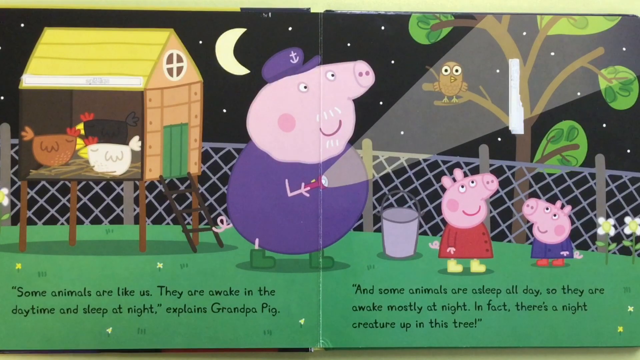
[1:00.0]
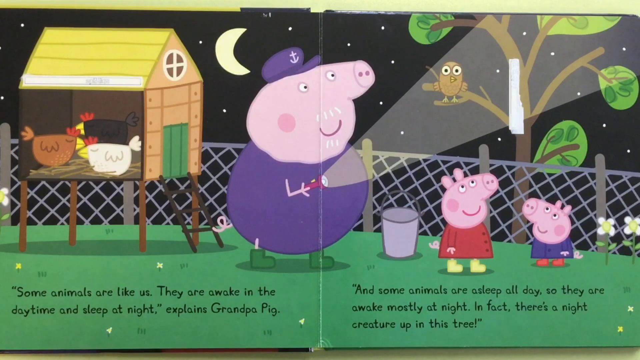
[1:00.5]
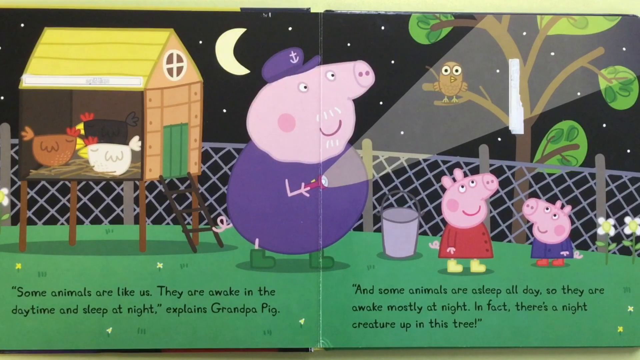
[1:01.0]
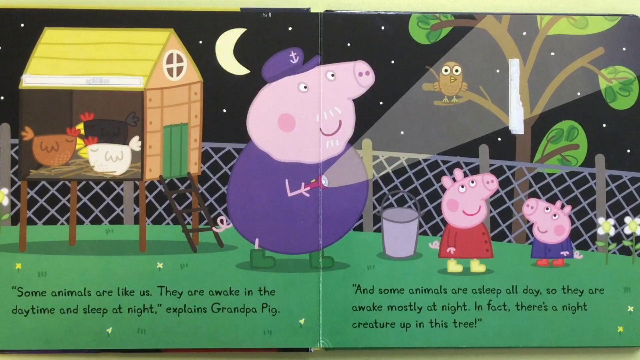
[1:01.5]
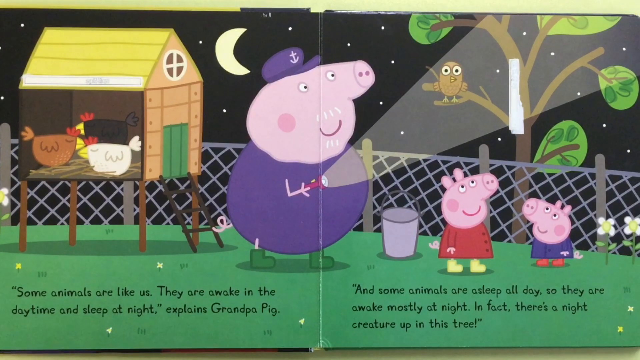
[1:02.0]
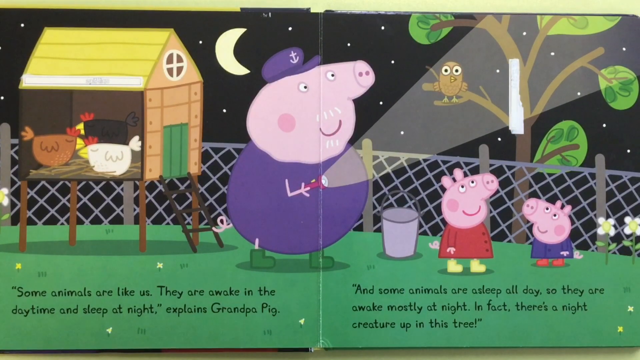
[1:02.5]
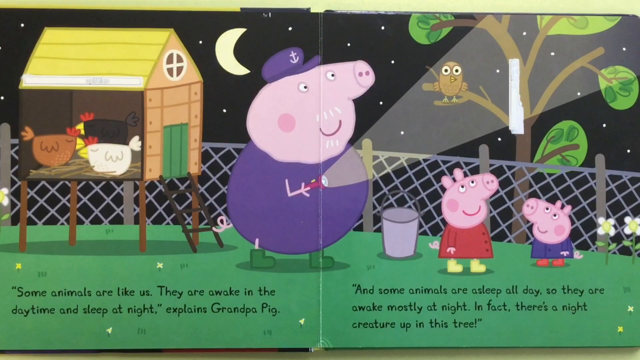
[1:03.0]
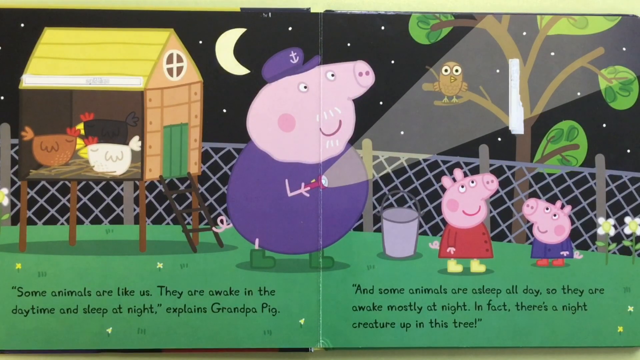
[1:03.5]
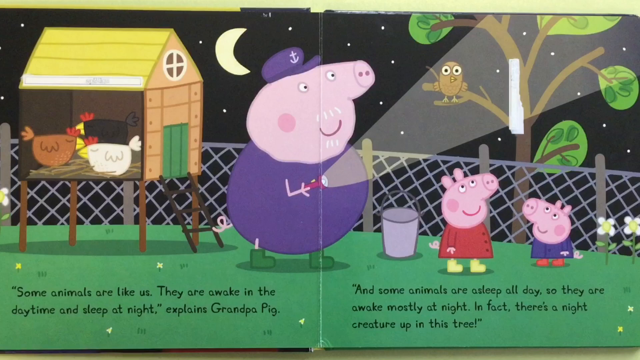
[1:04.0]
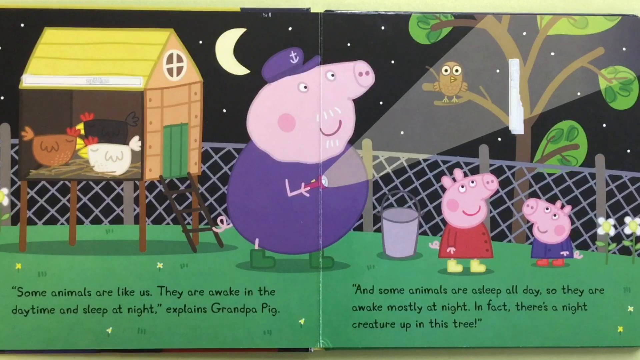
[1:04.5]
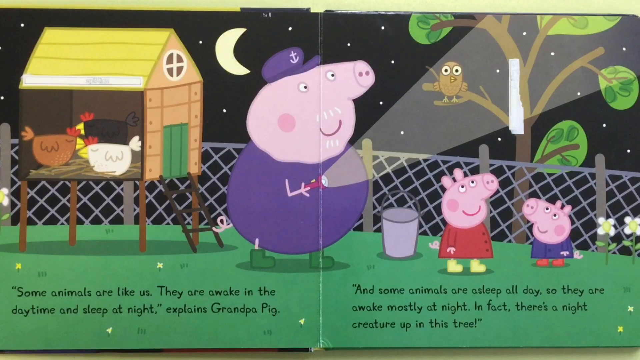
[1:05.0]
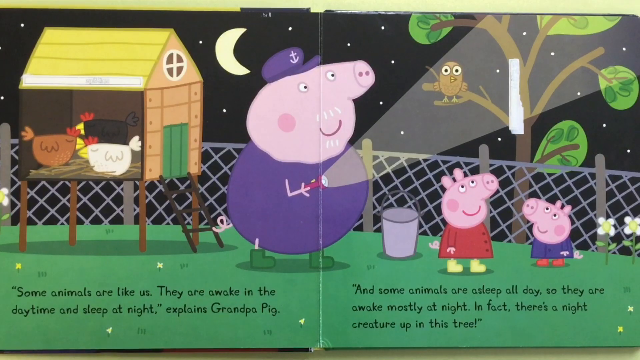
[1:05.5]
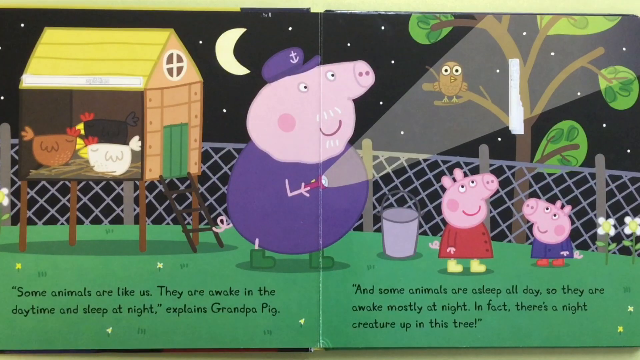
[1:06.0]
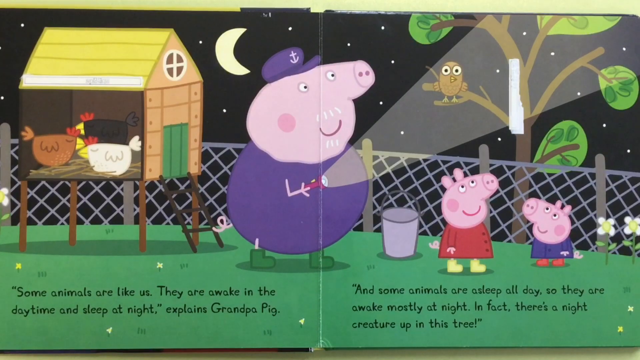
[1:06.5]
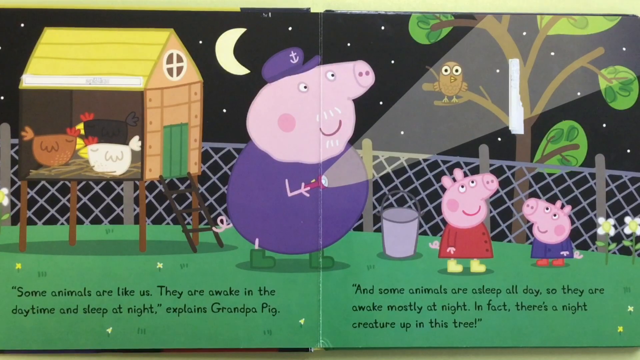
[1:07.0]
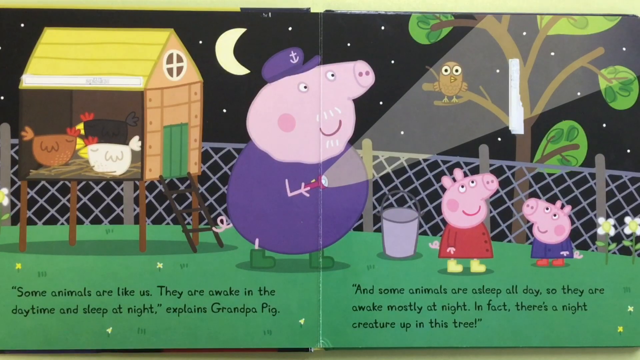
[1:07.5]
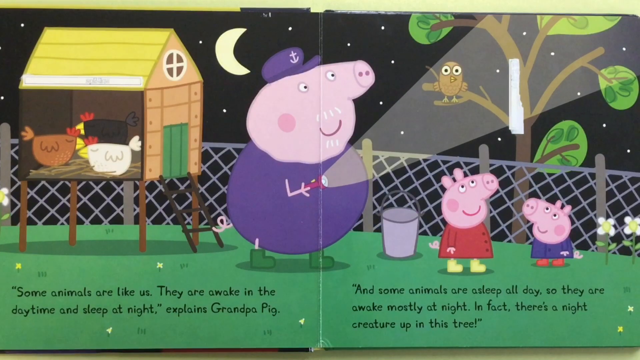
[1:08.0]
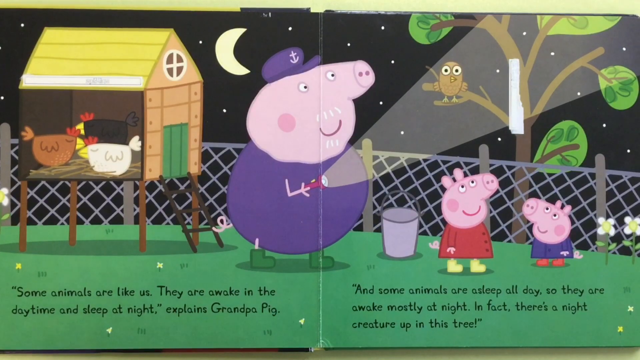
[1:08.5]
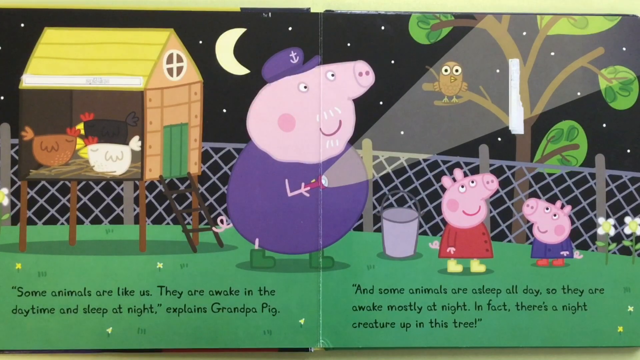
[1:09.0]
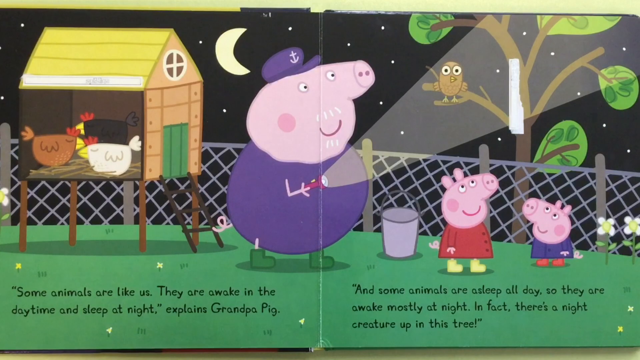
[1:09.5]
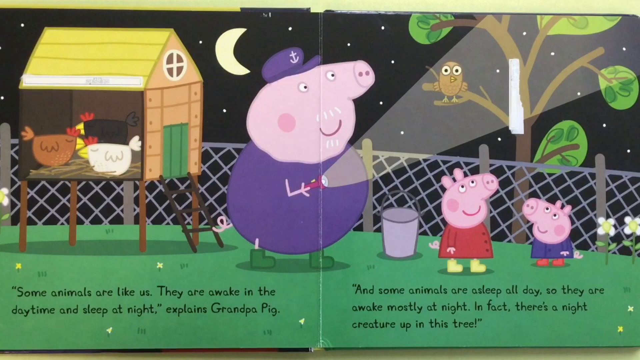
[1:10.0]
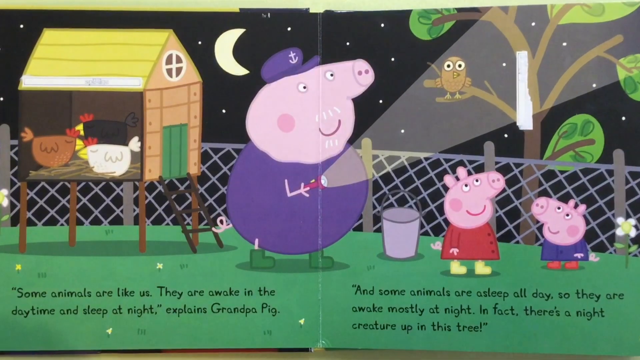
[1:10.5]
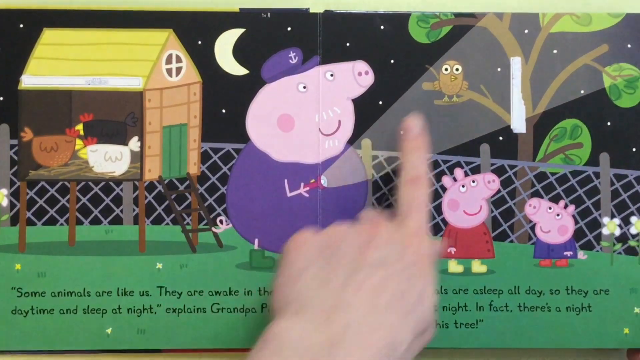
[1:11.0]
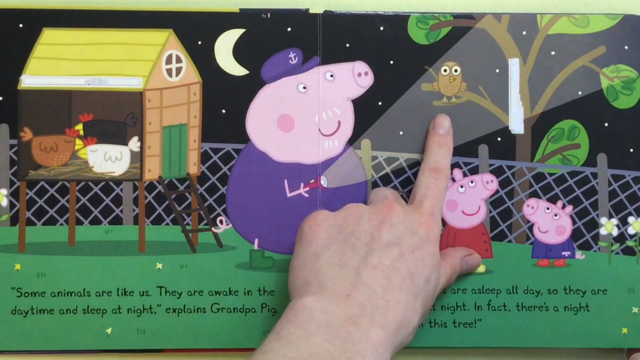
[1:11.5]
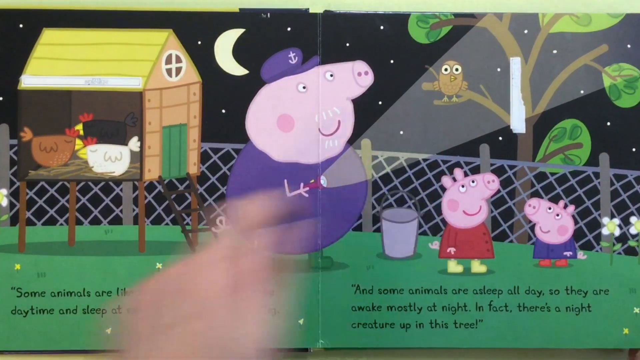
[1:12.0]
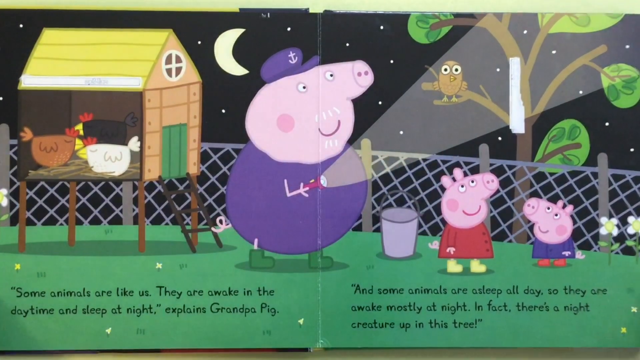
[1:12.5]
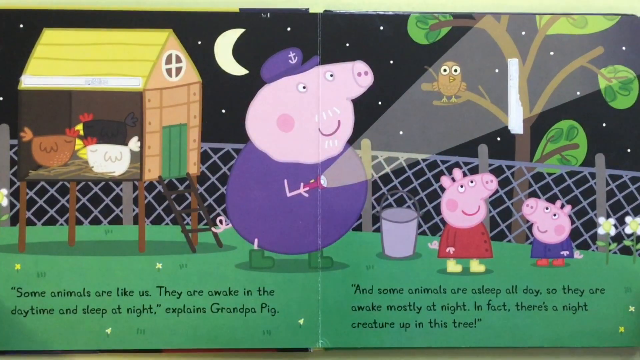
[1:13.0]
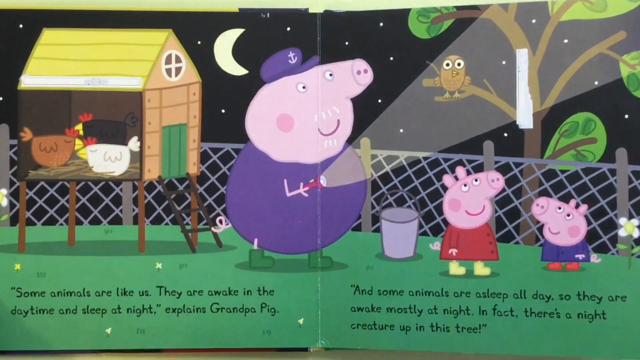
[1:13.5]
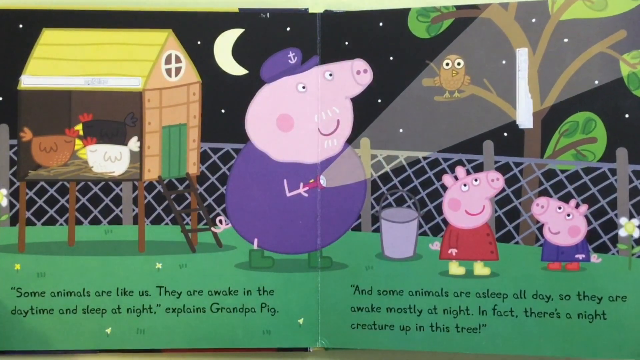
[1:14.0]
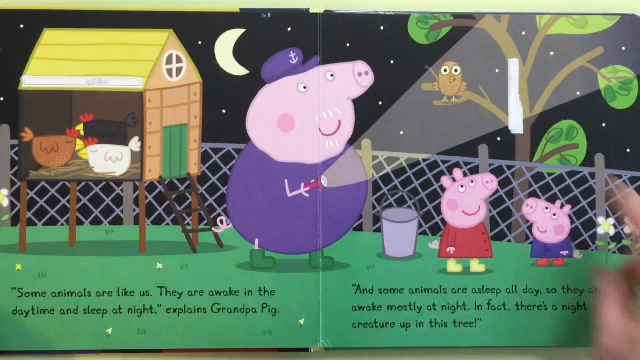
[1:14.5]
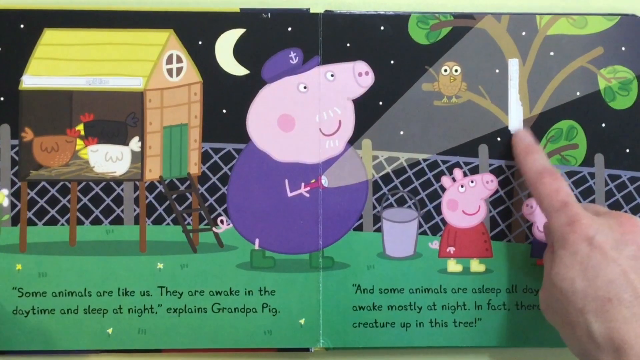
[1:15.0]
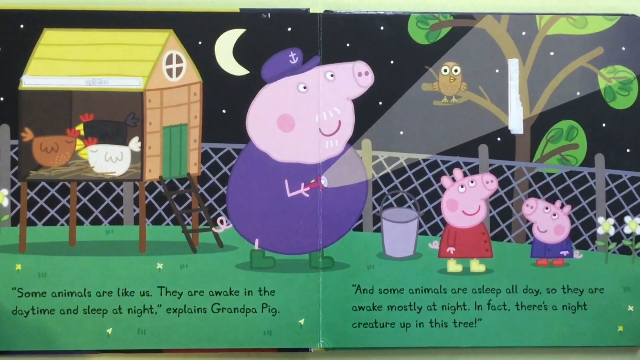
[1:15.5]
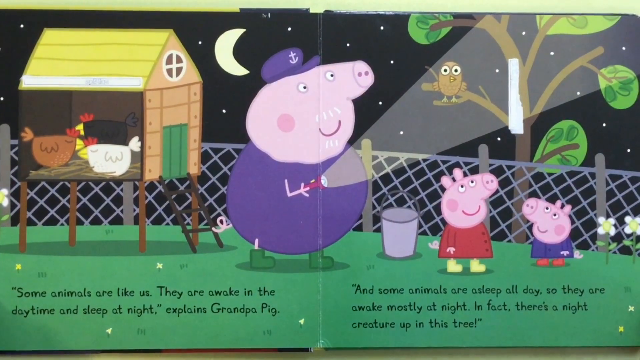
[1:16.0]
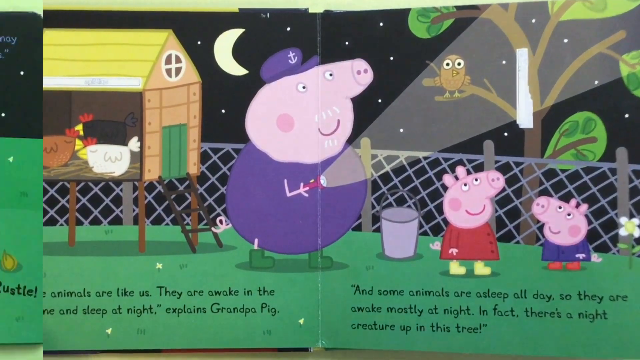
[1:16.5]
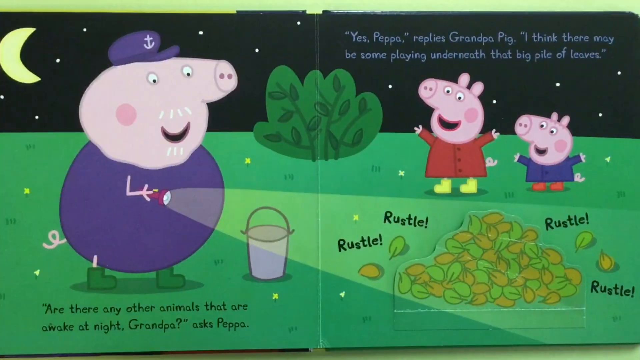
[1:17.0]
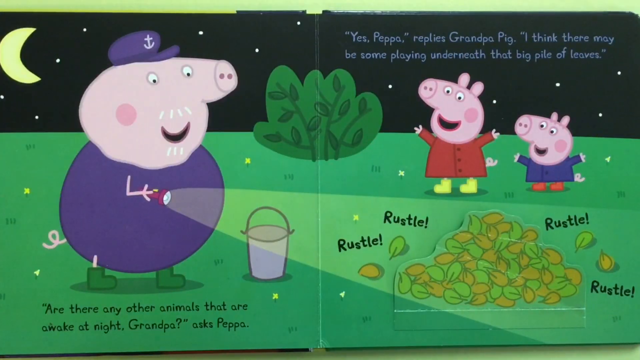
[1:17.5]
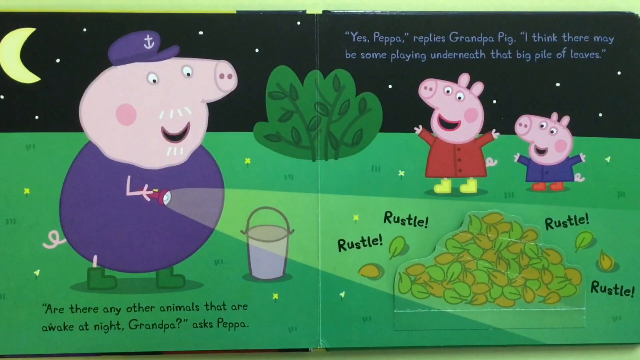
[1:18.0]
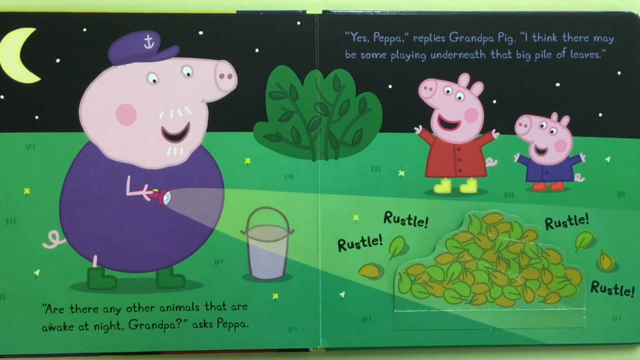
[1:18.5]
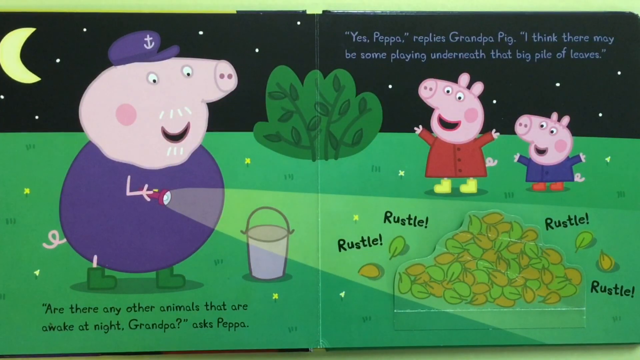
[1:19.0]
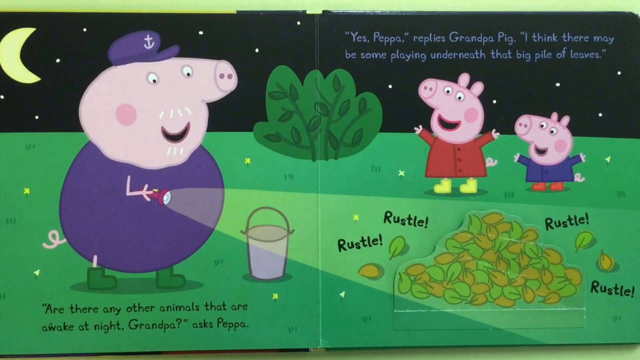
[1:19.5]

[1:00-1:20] The next page of the interactive Peppa Pig book, Night Creatures, has text at the bottom reading: "some animals are like us. They are awake in the daytime and sleep at night, explains Grandpa Pig, and some animals are asleep all day long, so they're awake mostly at night. In fact, there's a night creature up in this tree." Grandpa Pig, wearing purple and a purple hat, shines his flashlight up into a tree, where there is a big owl with big eyes. In front of Grandpa Pig is Peppa Pig, a little girl pig in a red dress and yellow boots, and her tiny little brother in a purple outfit and red boots. To the left of Grandpa Pig is a chicken roost, and the chickens are all sleeping.